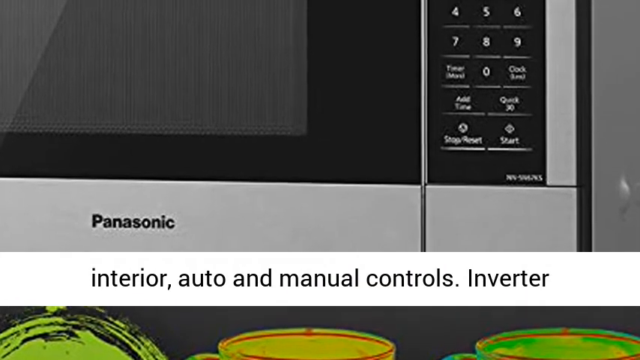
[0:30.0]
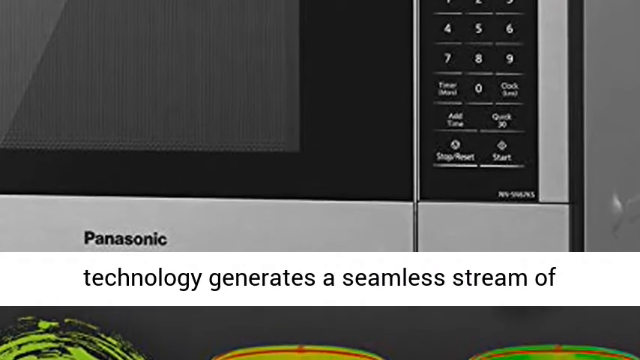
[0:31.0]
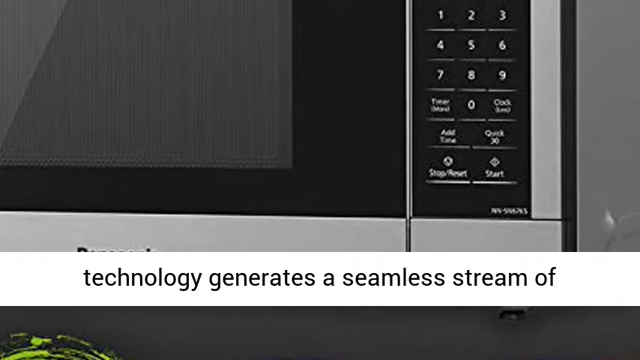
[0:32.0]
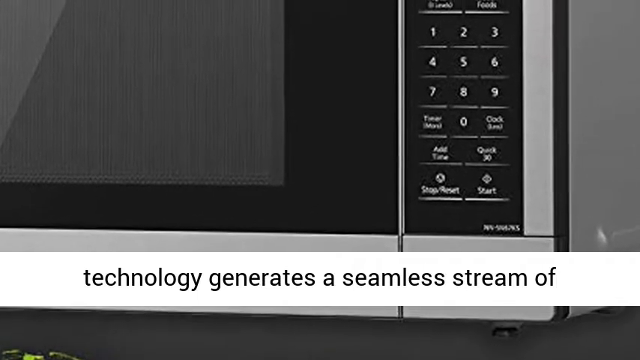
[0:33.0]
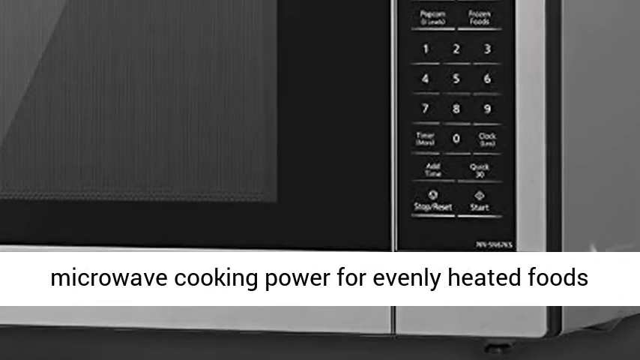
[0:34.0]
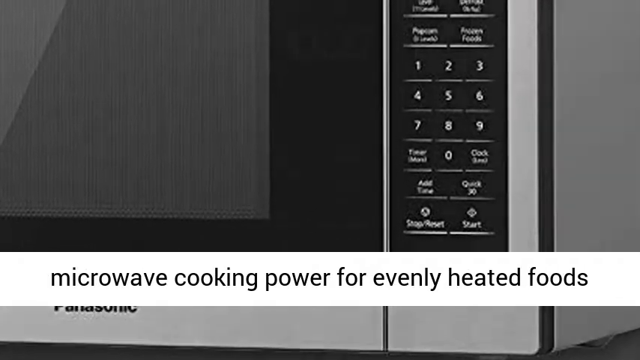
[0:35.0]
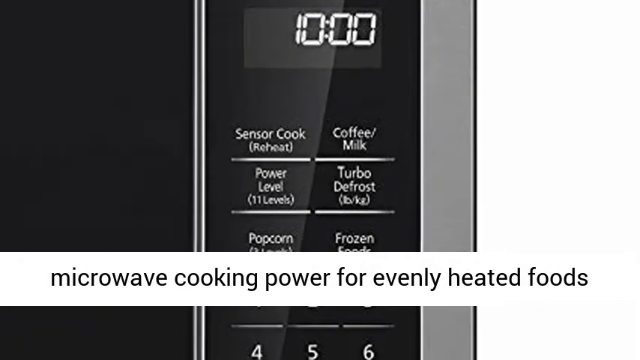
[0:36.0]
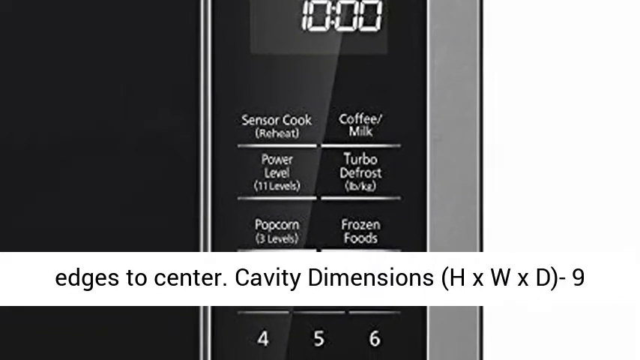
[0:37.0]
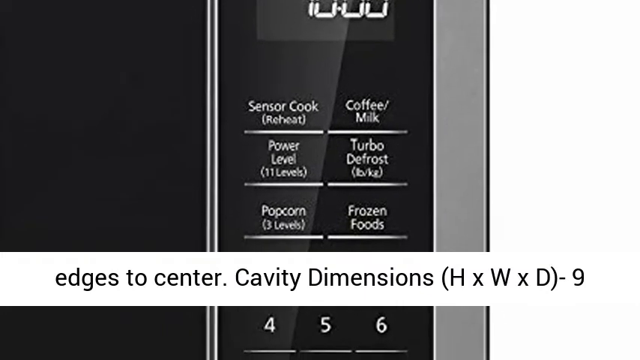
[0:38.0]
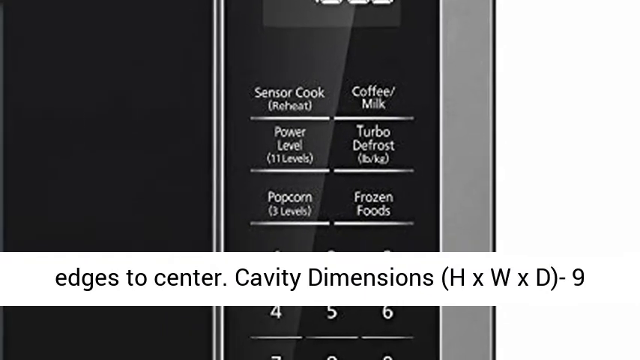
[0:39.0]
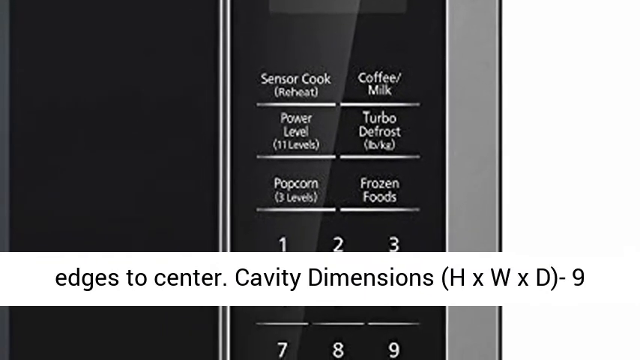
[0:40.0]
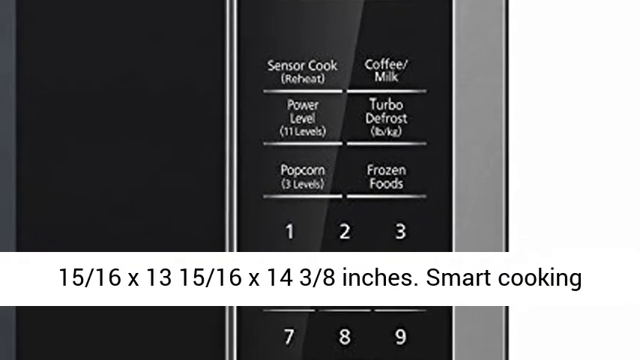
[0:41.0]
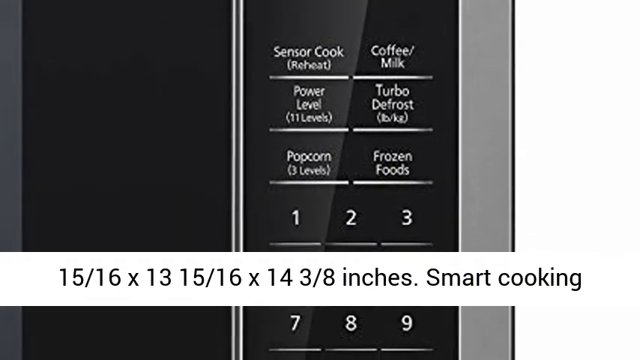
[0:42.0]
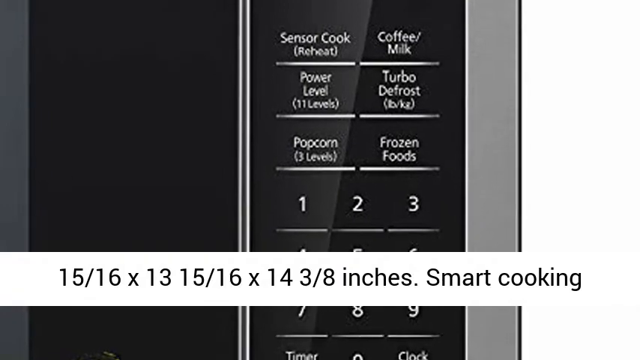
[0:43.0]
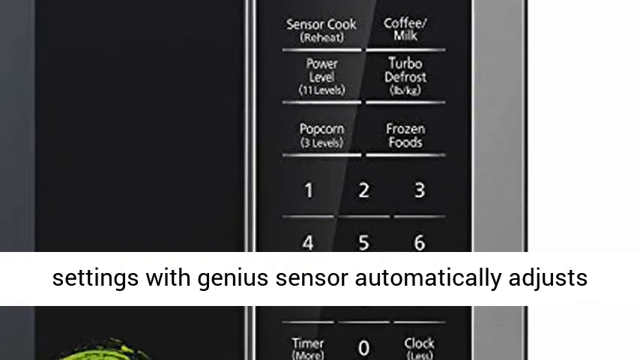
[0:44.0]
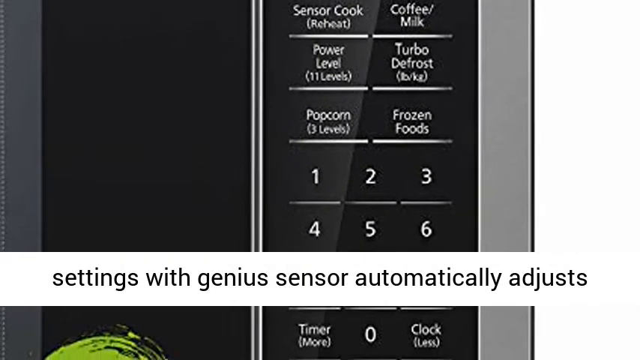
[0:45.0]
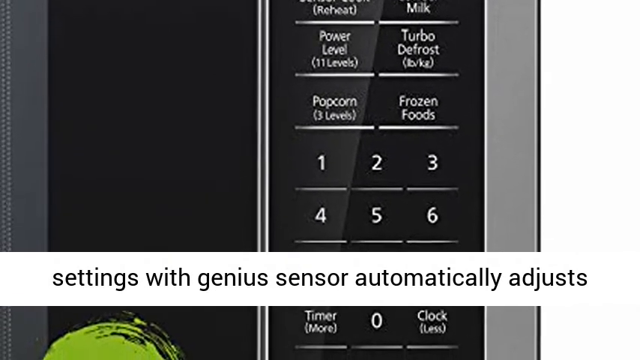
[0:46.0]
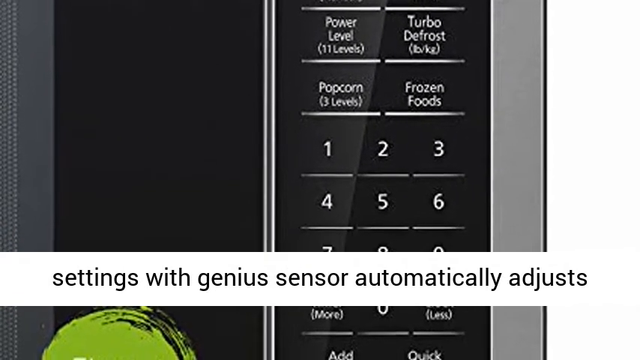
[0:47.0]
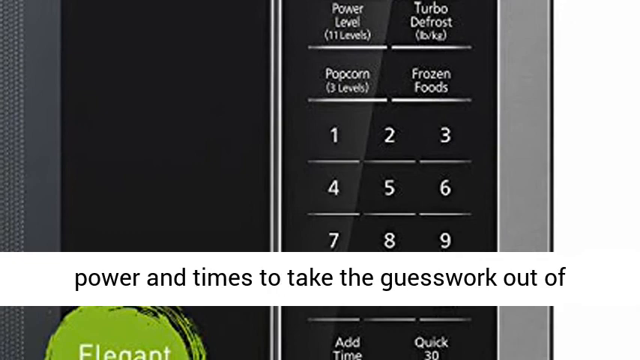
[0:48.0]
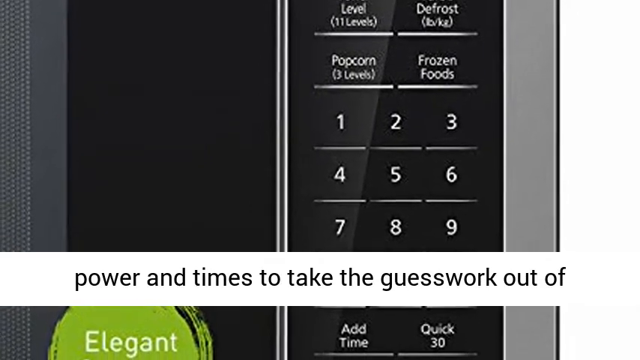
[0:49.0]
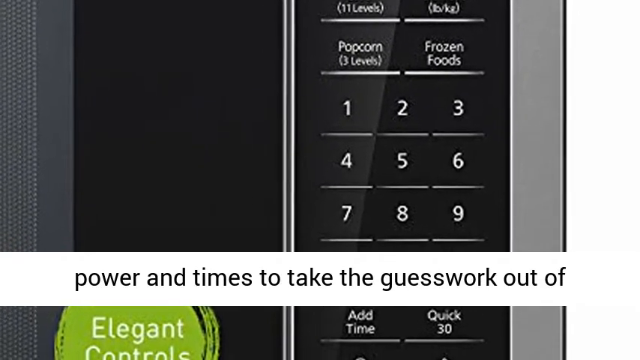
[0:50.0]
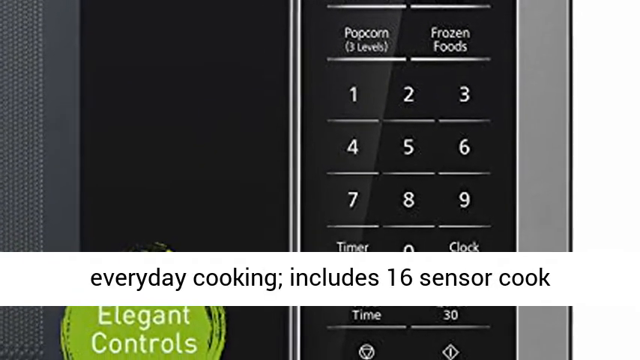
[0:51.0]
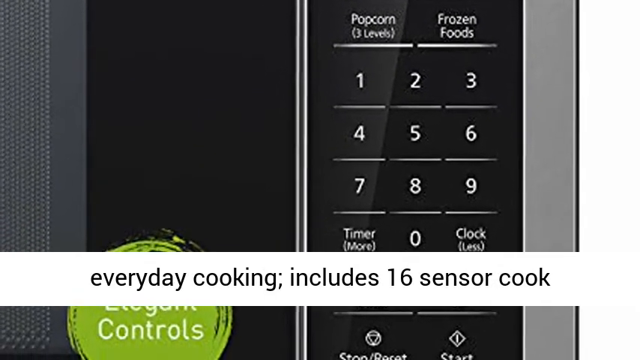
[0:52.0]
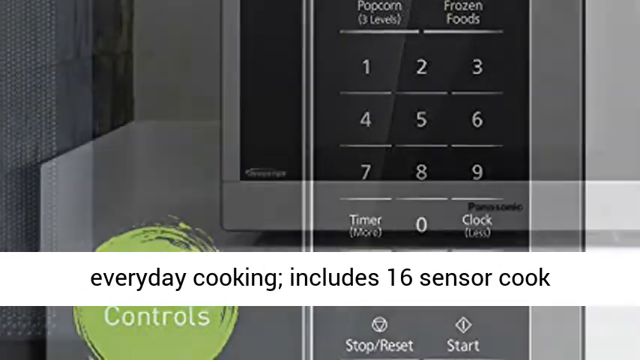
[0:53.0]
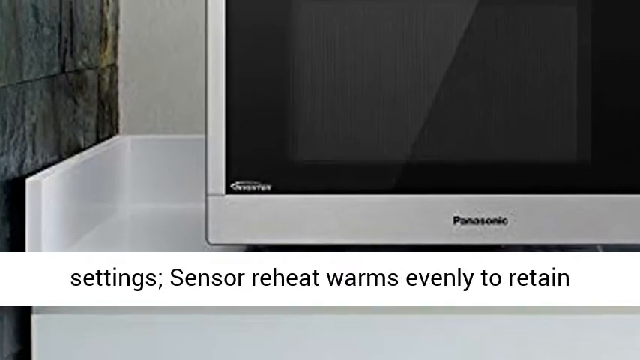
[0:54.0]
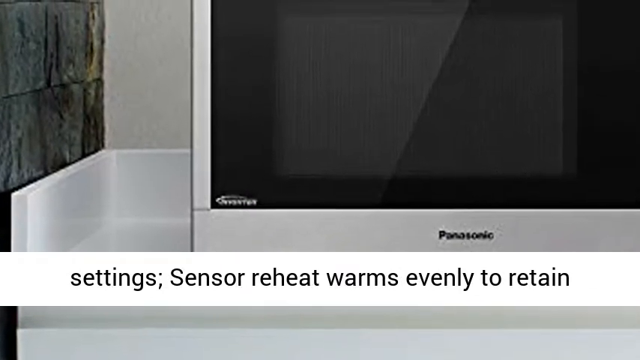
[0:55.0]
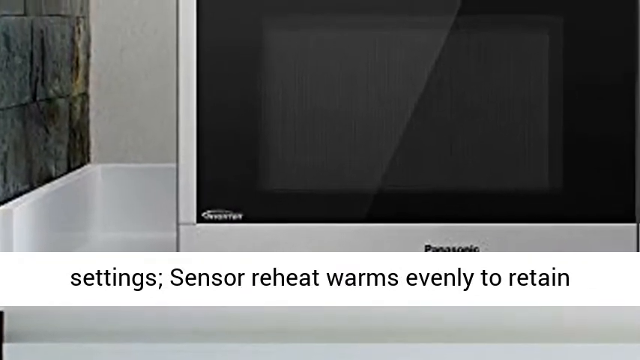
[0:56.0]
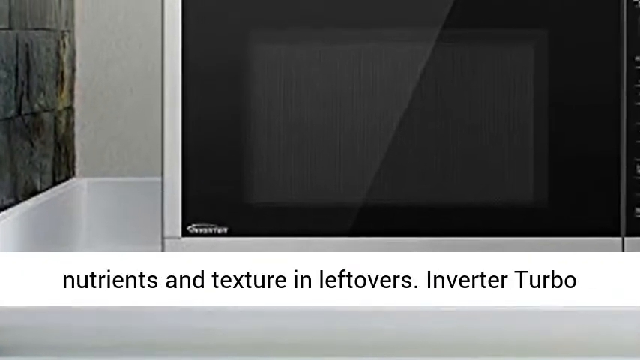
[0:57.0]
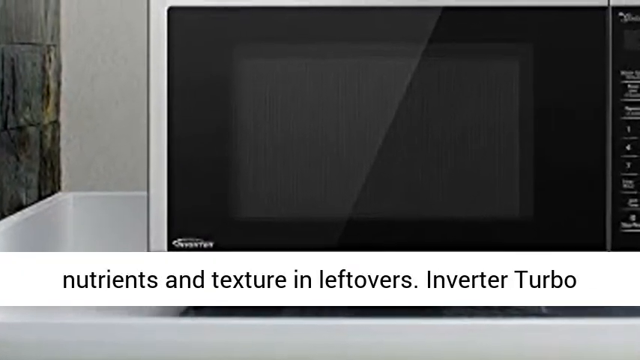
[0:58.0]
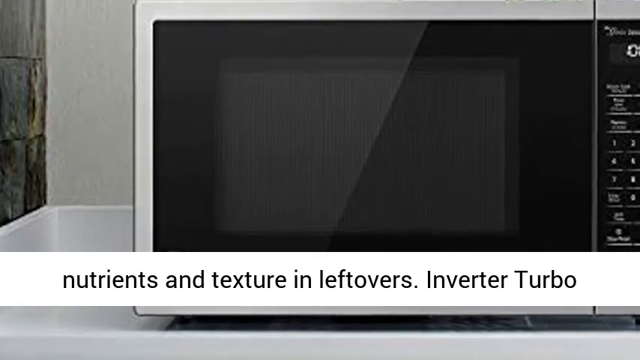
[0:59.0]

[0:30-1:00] The Panasonic 1,200 watt microwave, silver on the outside and black on the inside, remains on screen while text at the bottom lists its features and functions. It reads "interior auto and manual technology generates a seamless stream of microwave cooking power for evenly heated foods, edges to center." The text then gives the cavity dimensions by height, width and depth as 9 15/16 by 13 15/16 by 14 3/8 inches. Next it reads "smart cooking settings with genius sensor automatically adjusts power and times to take the guesswork out of everyday cooking. Includes 16 sensor cook settings. Sensor reheat warms evenly to retain nutrients and texture in leftovers. Inverter turbo technology."